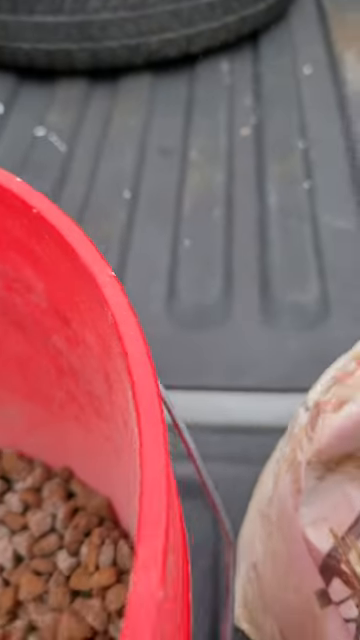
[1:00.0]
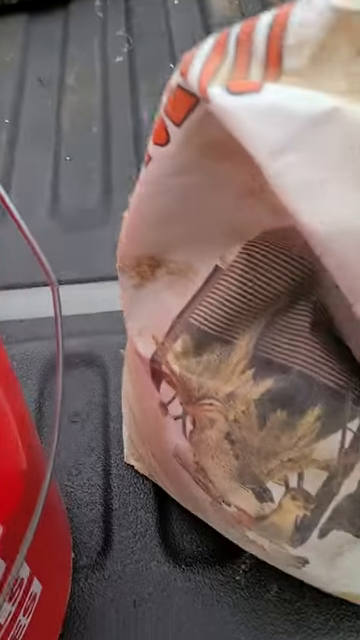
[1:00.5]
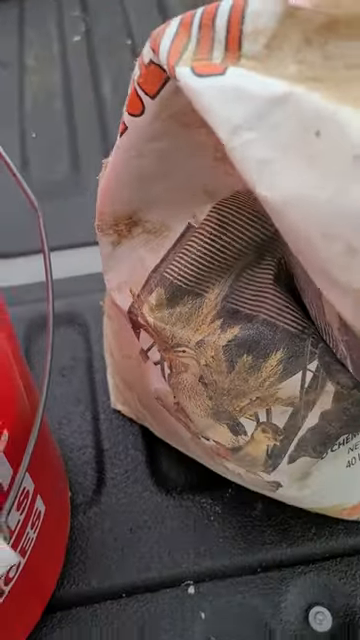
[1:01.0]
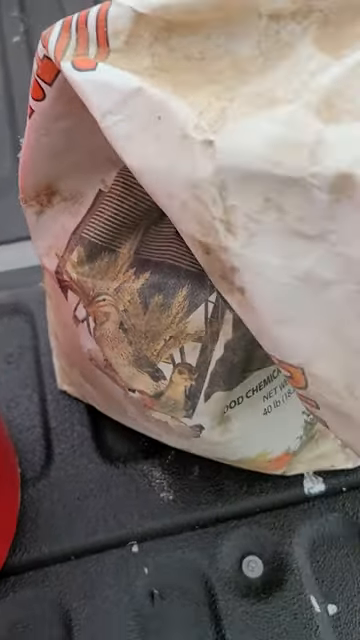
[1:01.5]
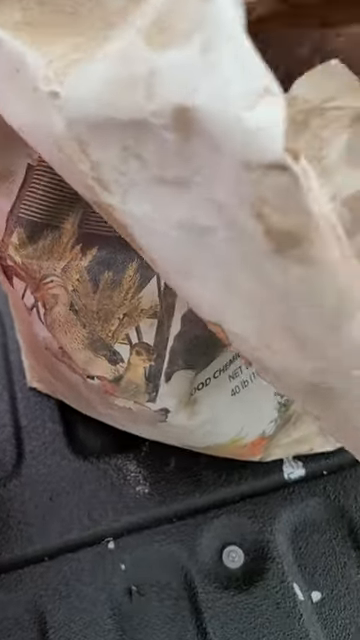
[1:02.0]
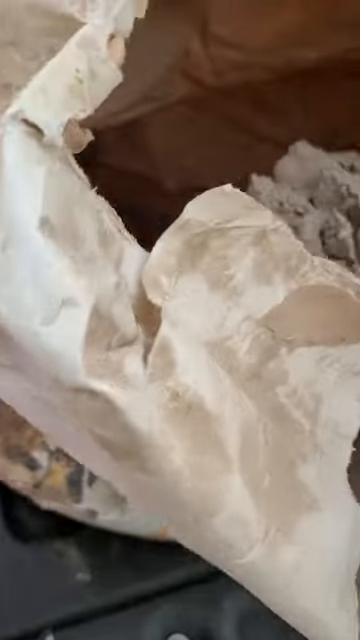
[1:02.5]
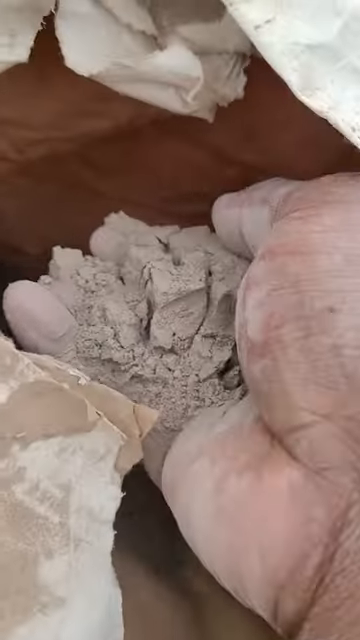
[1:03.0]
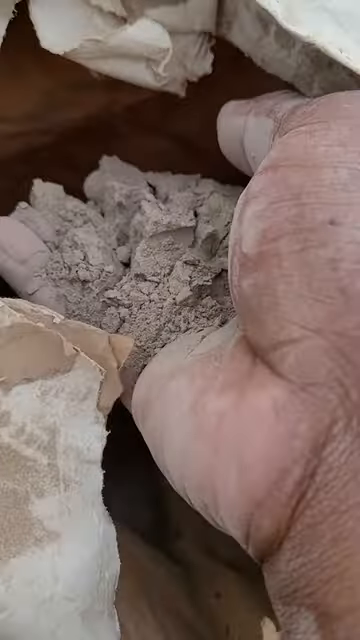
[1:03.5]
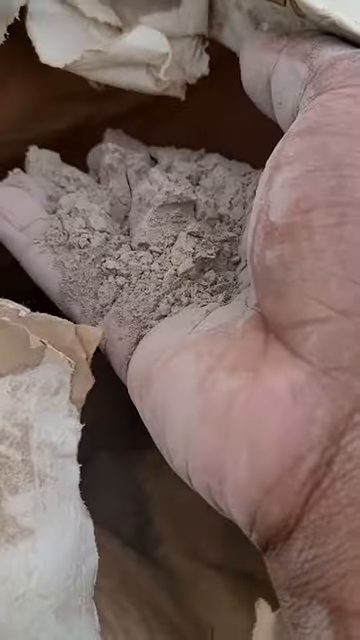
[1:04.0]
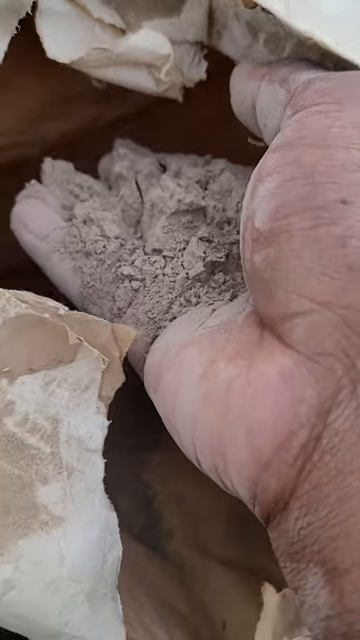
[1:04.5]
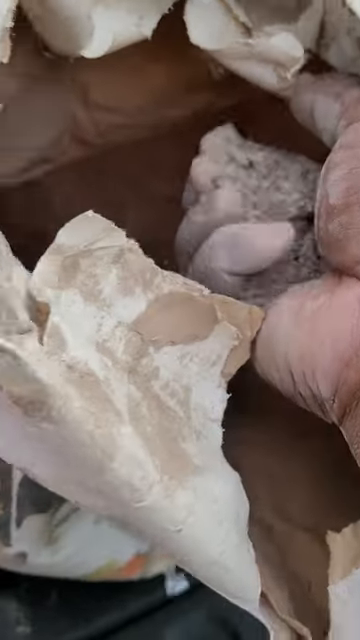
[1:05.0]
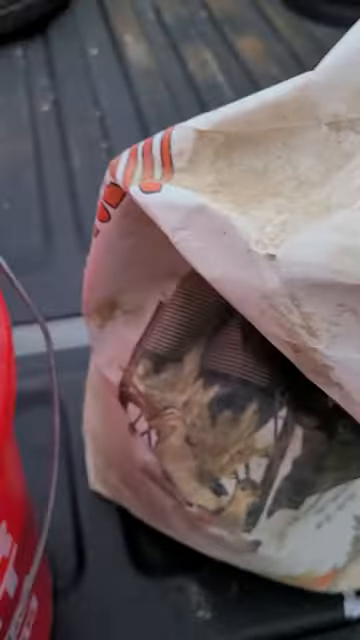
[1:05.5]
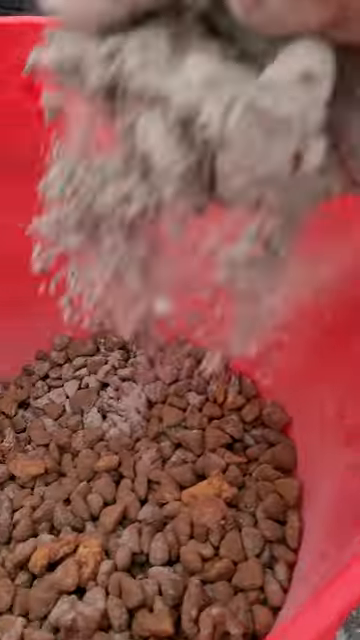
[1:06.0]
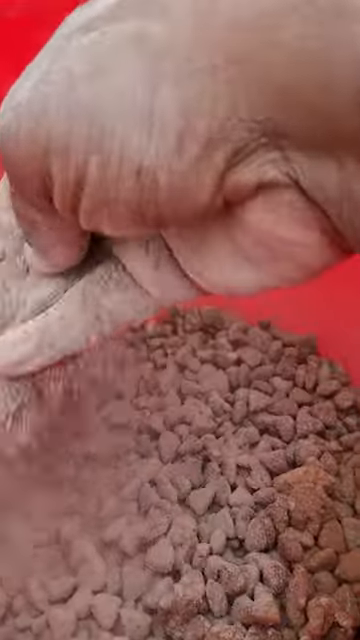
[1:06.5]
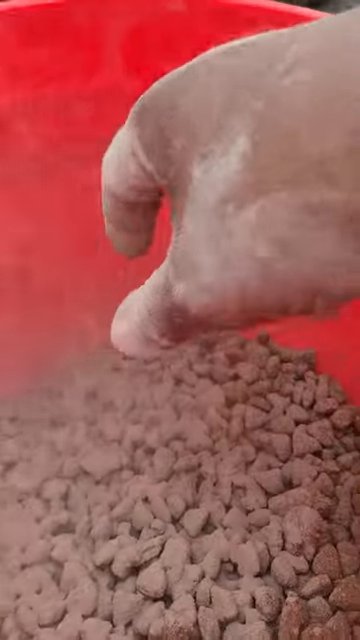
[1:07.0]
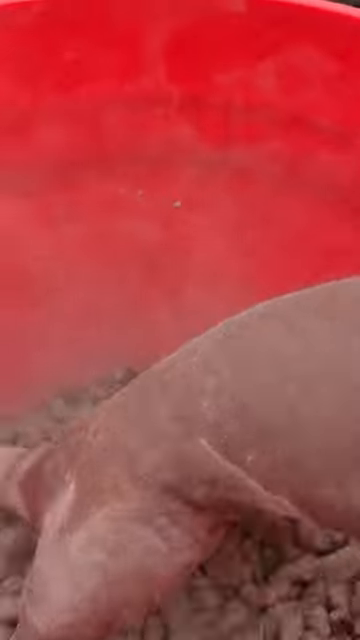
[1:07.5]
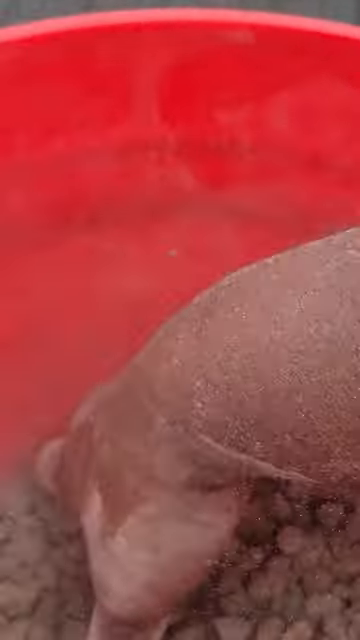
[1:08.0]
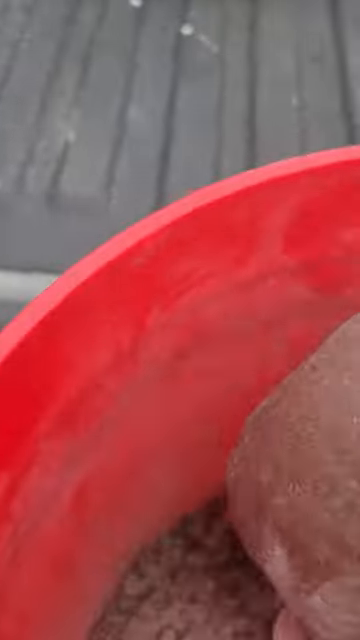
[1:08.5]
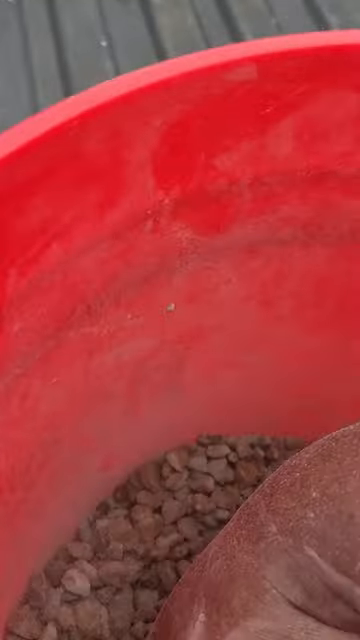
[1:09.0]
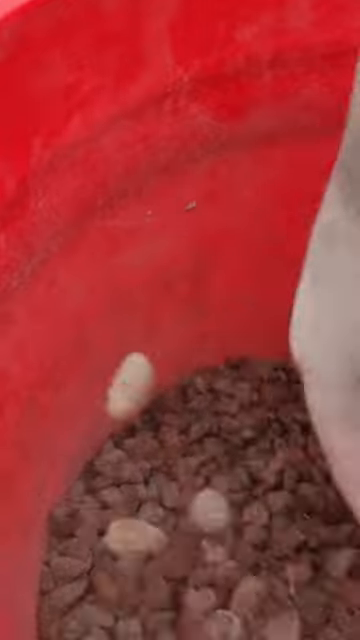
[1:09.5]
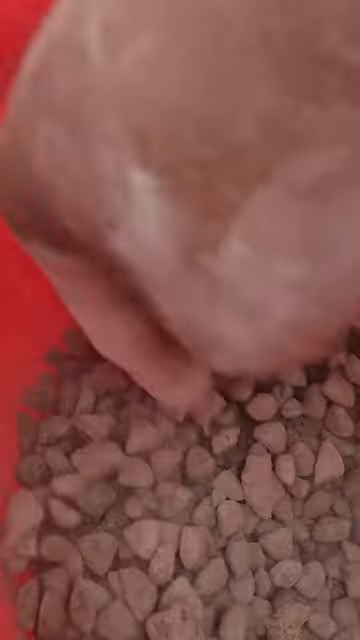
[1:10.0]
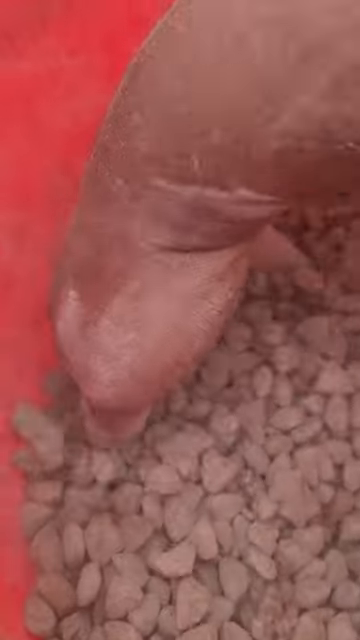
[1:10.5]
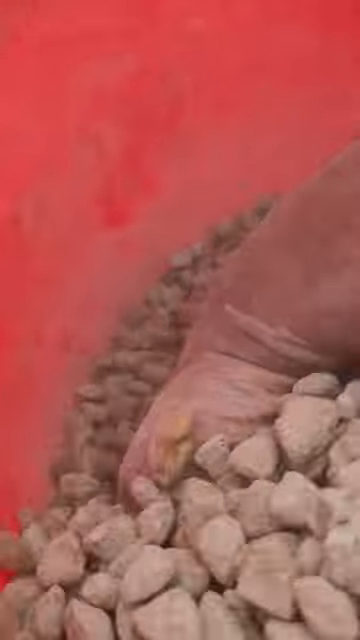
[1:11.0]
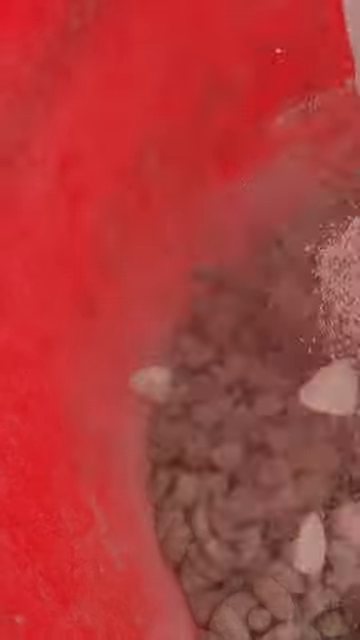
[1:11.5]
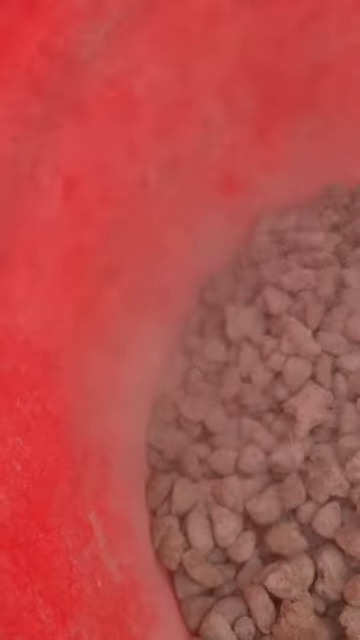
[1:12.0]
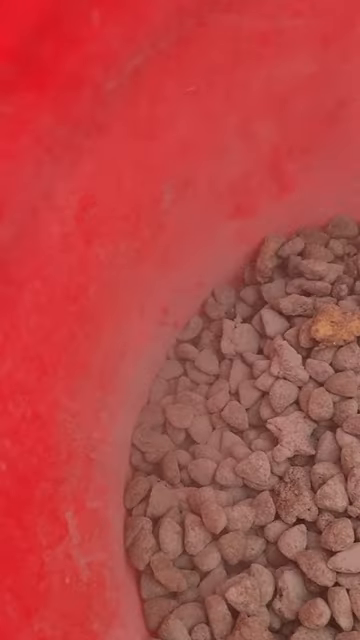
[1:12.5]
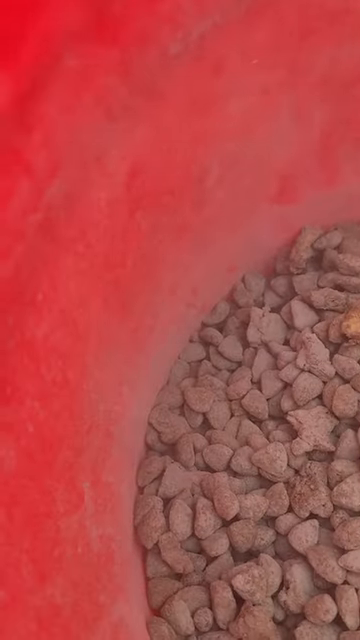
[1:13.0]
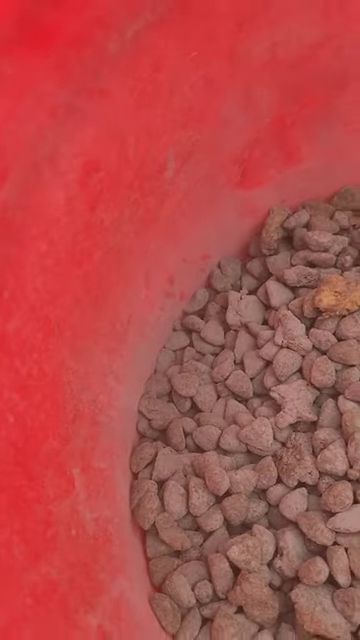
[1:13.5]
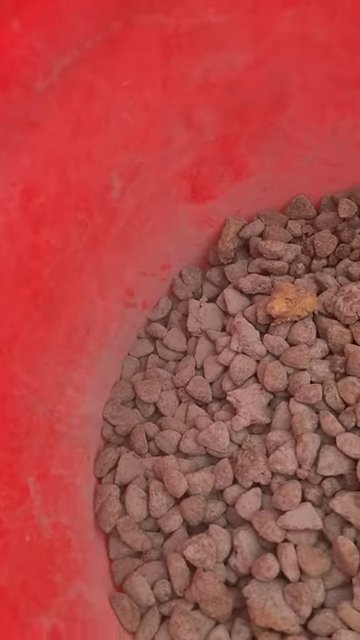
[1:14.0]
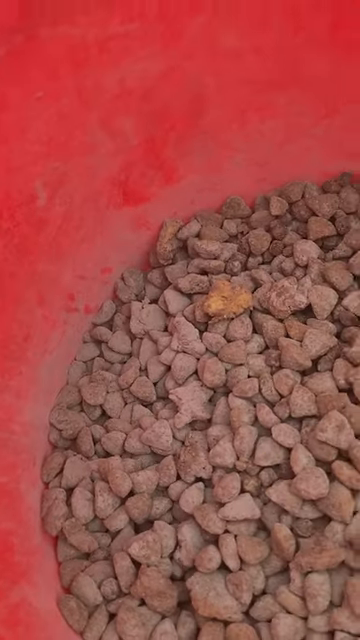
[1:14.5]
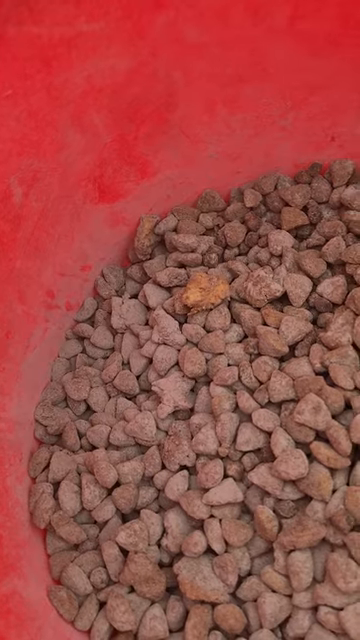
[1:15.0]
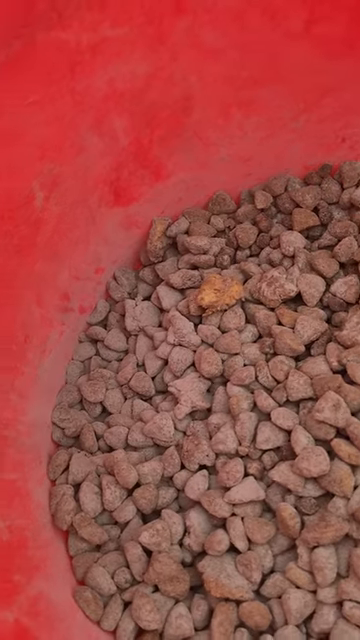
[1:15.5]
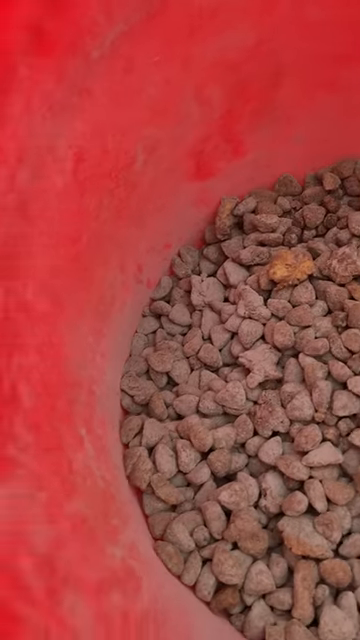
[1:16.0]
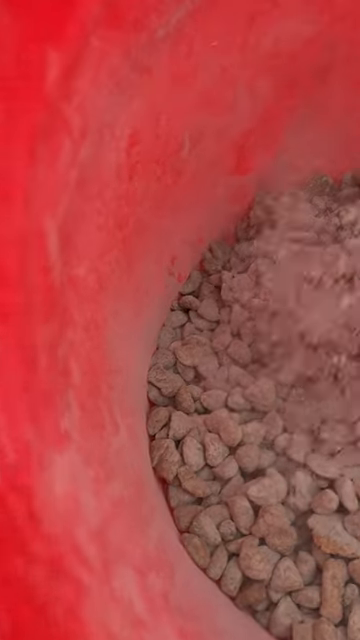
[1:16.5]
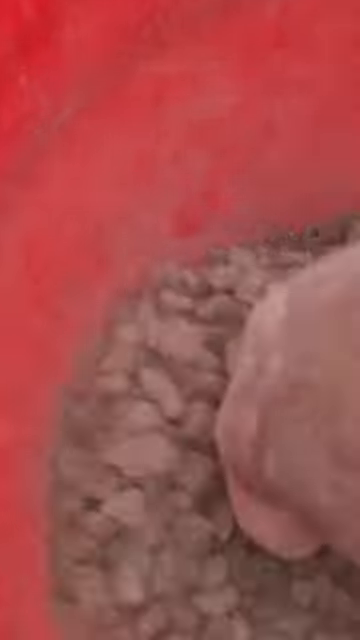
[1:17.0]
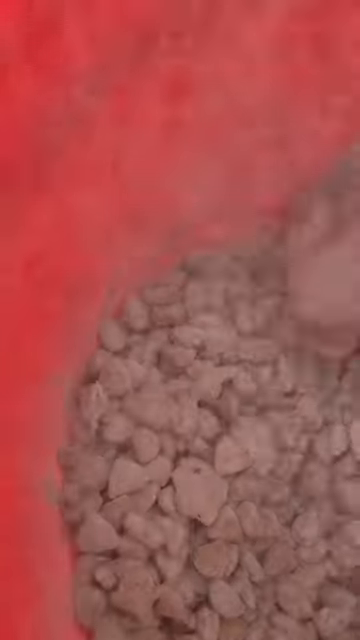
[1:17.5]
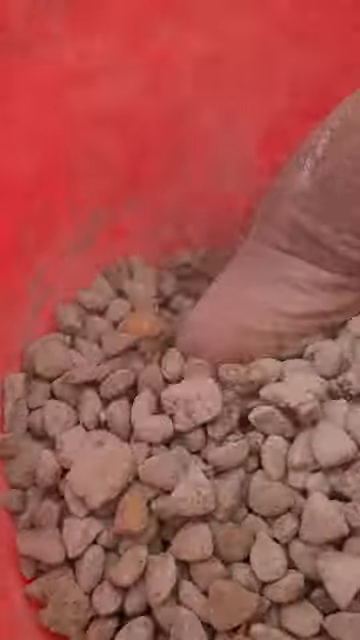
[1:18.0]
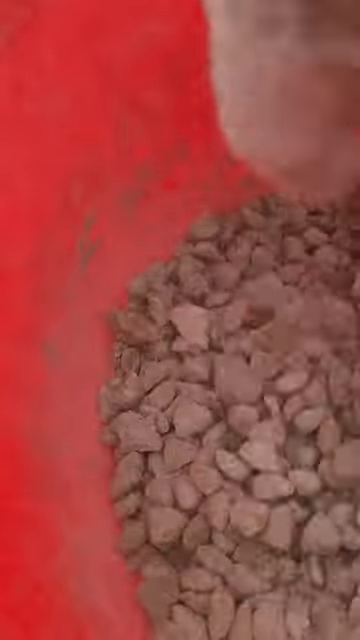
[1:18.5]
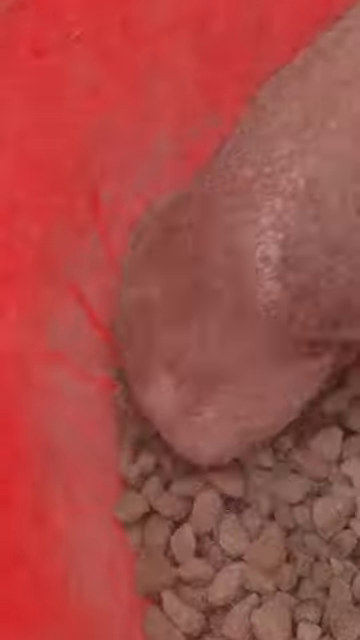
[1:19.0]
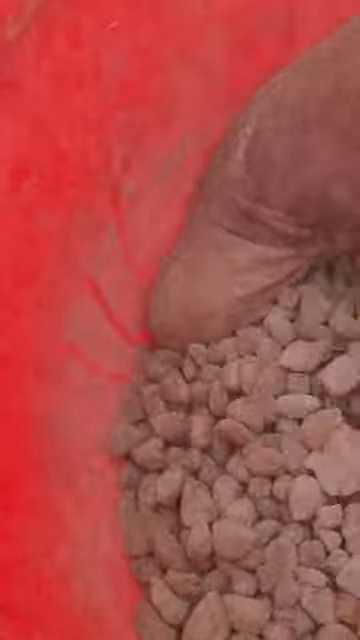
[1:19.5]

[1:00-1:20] The owner of the dogs has a hand inside the white bag and holds some of its contents, which look like a gray powder; the owner's hand is covered in white powder. The owner clenches the fist with the powder inside, moves it over to the red bucket, sprinkles it all over the food, and stirs the food and powder around with a hand inside the bucket. The powder looks like a chemical add-on for food, and the food appears to be dog food.